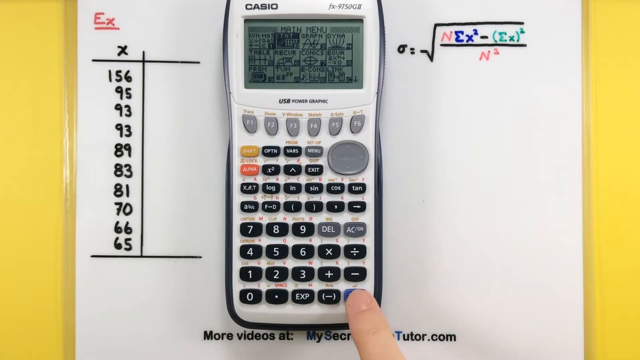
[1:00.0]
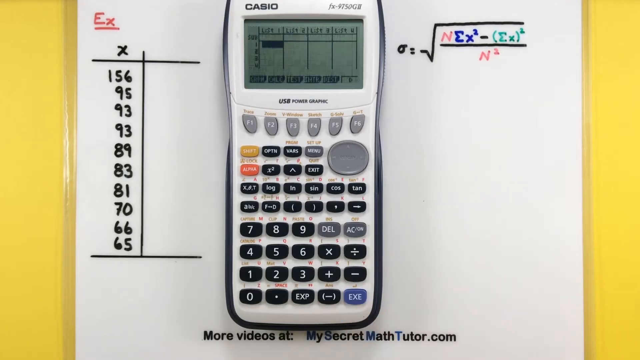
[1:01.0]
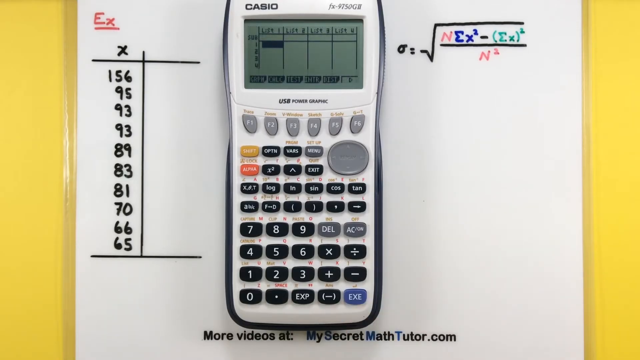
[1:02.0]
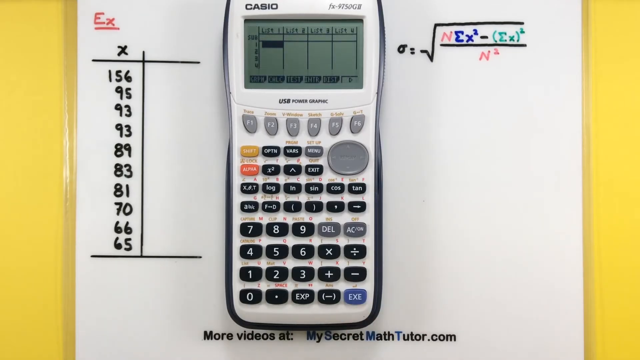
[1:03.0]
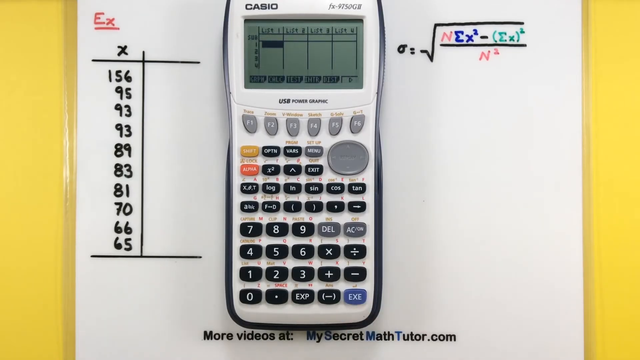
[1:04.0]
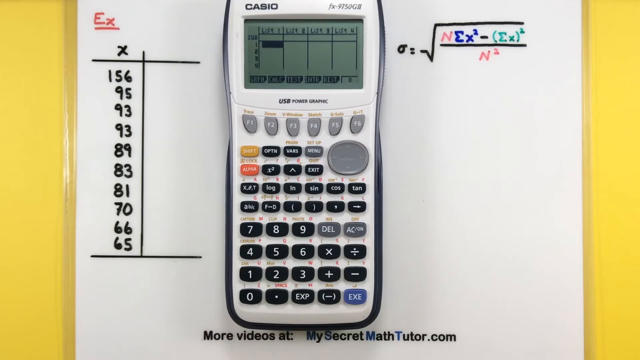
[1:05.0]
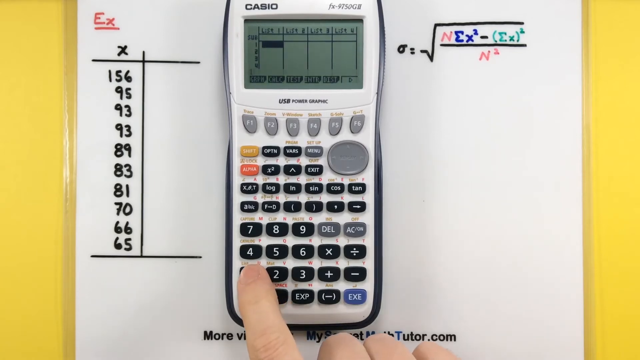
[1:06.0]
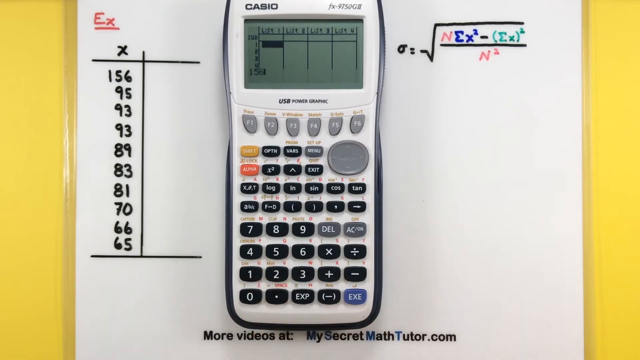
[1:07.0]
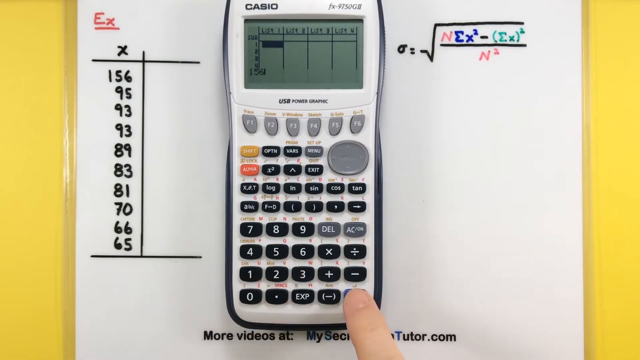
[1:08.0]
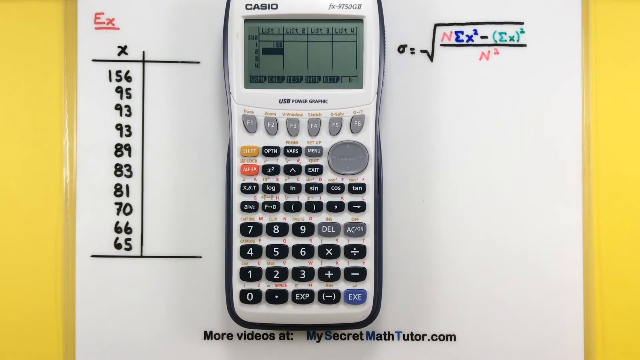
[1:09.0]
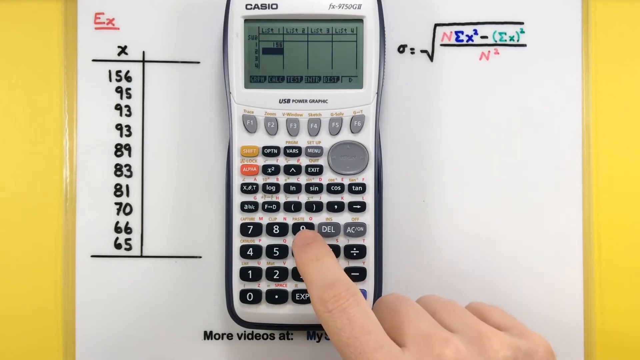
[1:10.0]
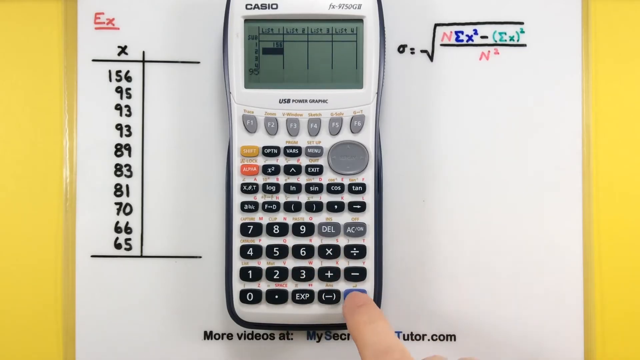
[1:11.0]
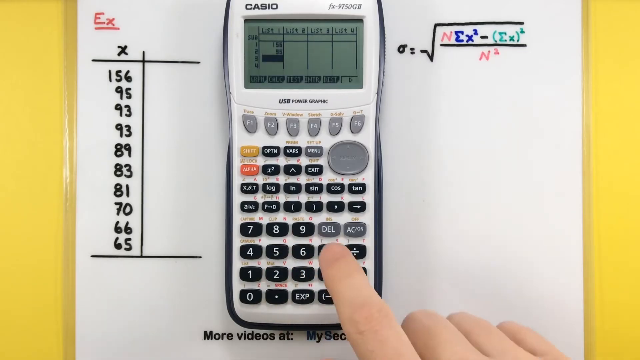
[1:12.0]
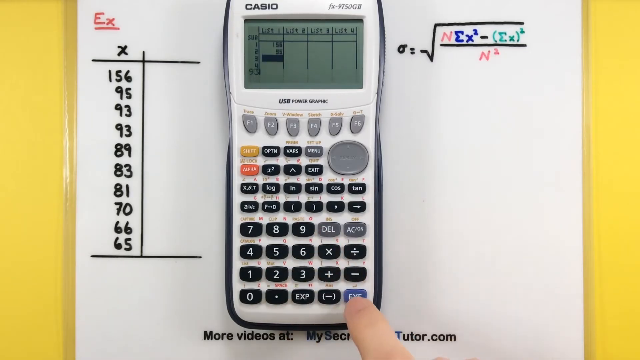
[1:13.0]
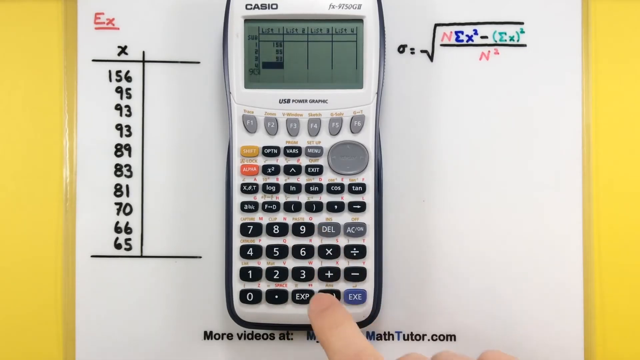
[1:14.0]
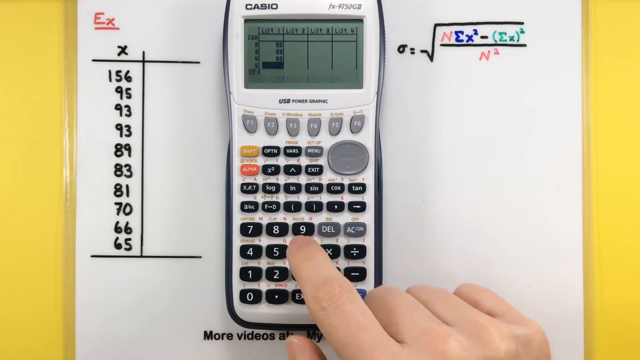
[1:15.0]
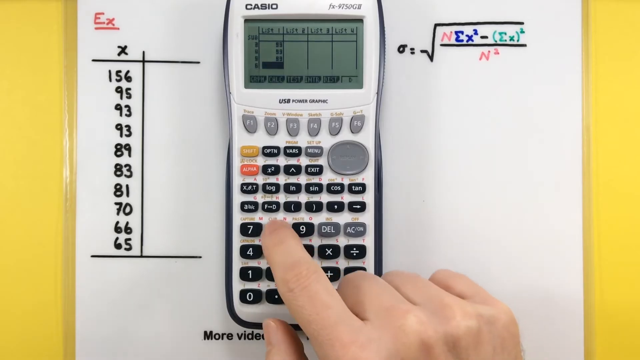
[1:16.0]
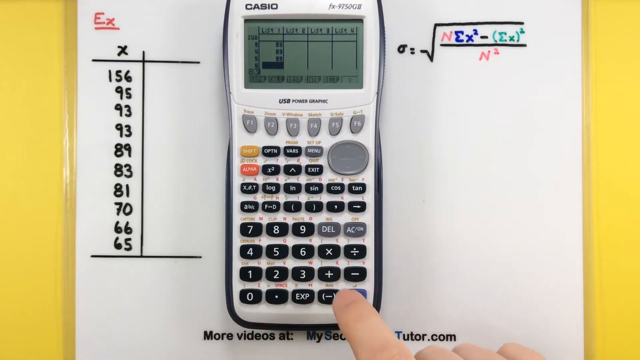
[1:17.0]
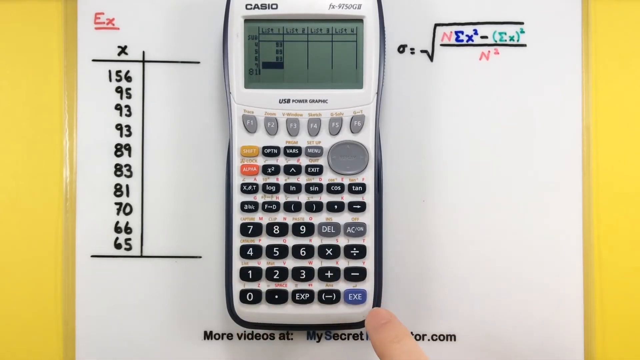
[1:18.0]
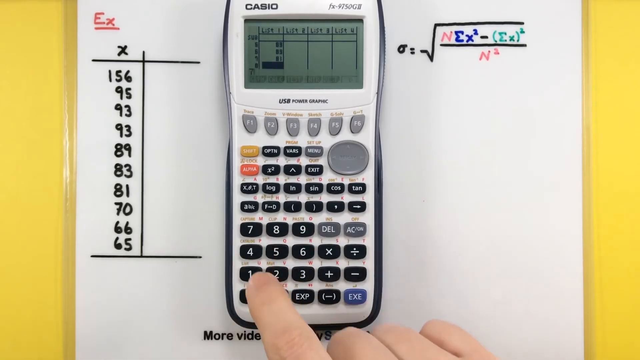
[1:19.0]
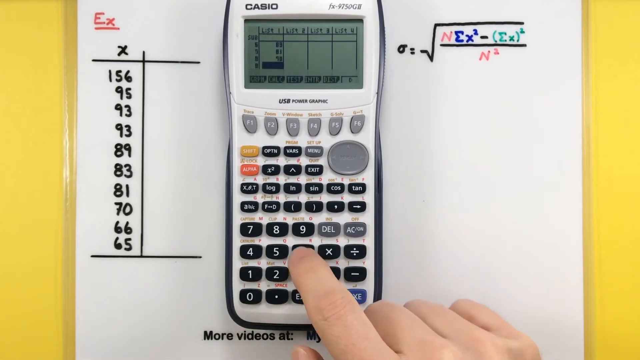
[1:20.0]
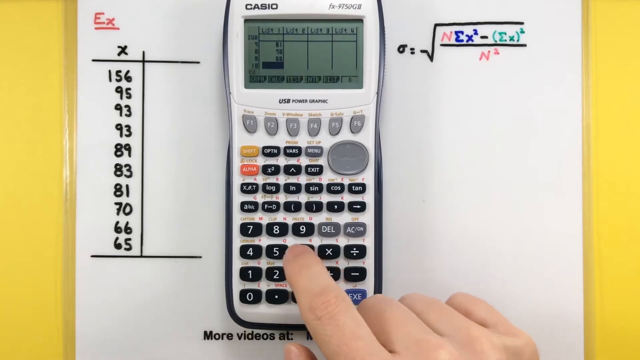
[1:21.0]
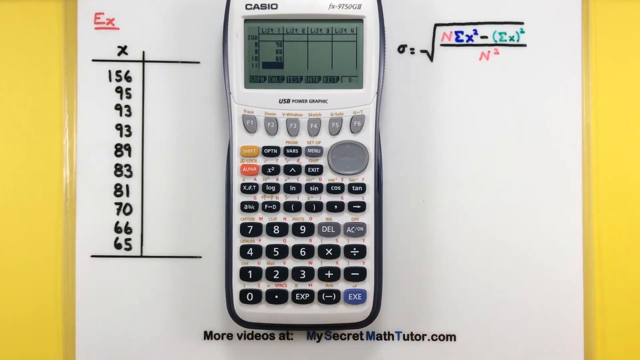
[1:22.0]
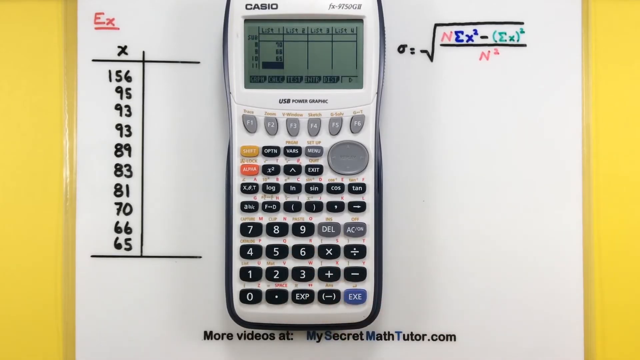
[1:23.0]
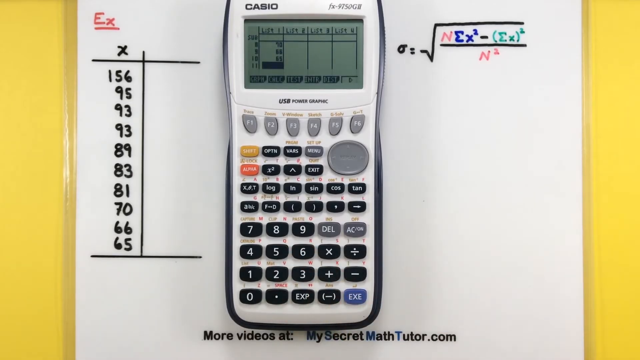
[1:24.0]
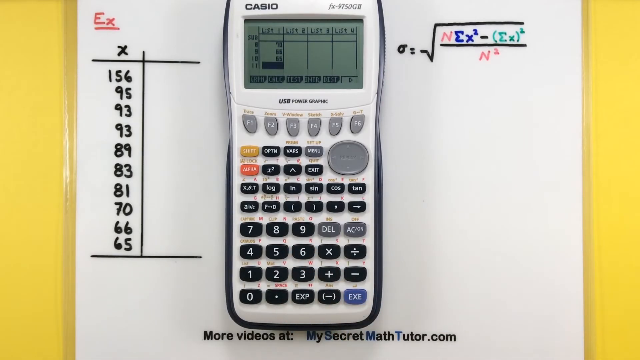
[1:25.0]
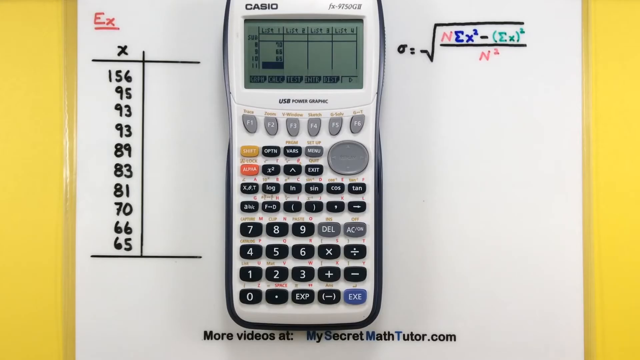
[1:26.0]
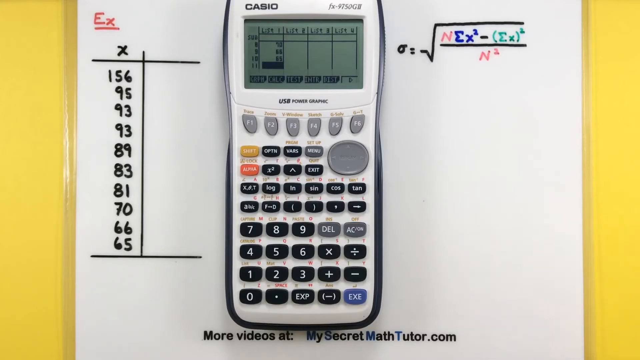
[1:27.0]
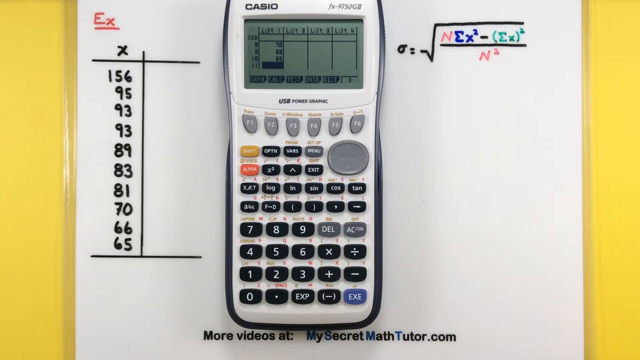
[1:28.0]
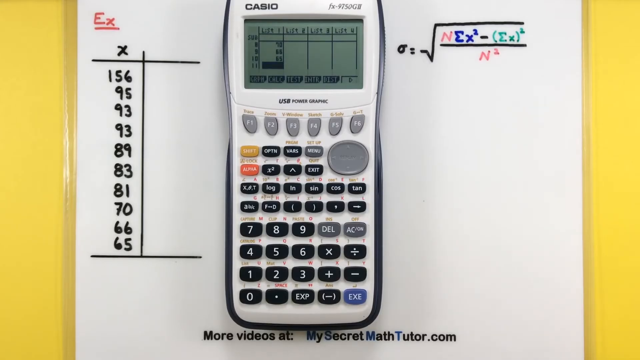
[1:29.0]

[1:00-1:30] A calculator is sitting on top of a laminated piece of paper on a yellow desk. The paper has a chart with an X at the top and the numbers 156, 95, 93, 93, 89, 83, 81, 70, 66, and 65 listed from top to bottom below it; to the right, the chart is empty. Everything on the paper is written in marker. The calculator is on and shows a chart on its screen. A right index finger appears on top of the calculator and starts inputting numbers into the chart, moving rapidly between keys, and the numbers appear on the screen as they are entered.